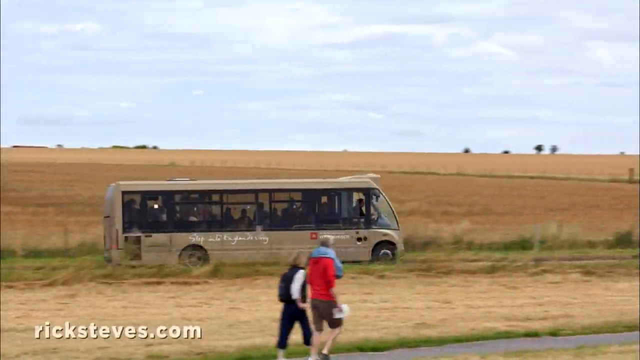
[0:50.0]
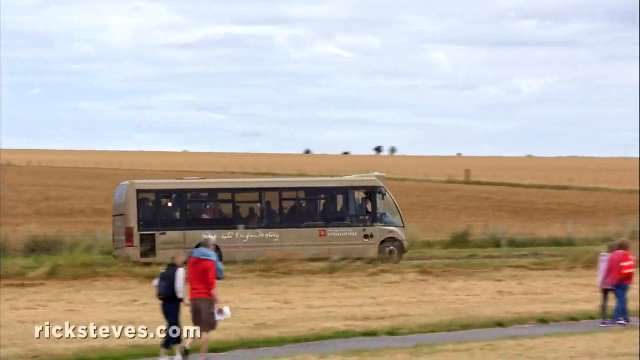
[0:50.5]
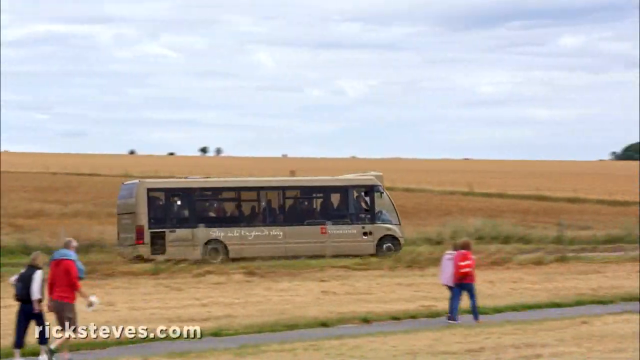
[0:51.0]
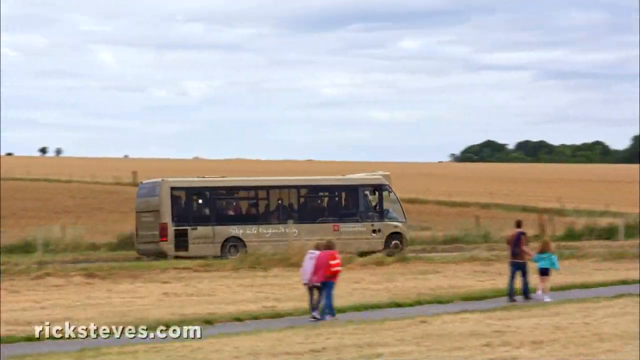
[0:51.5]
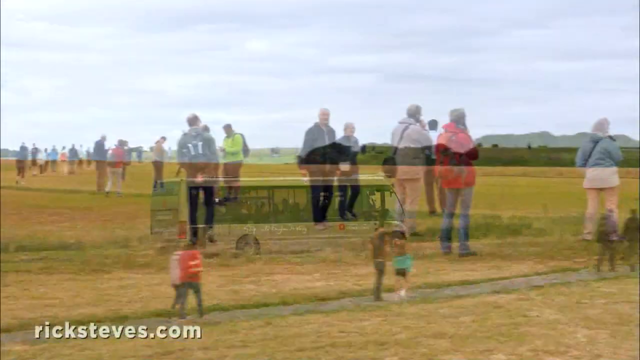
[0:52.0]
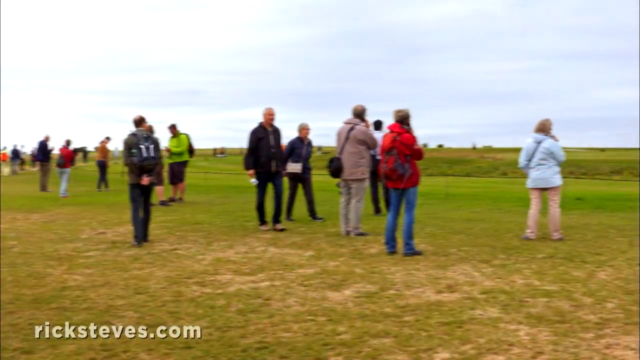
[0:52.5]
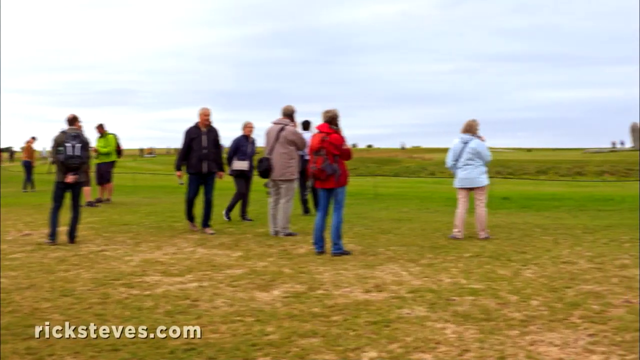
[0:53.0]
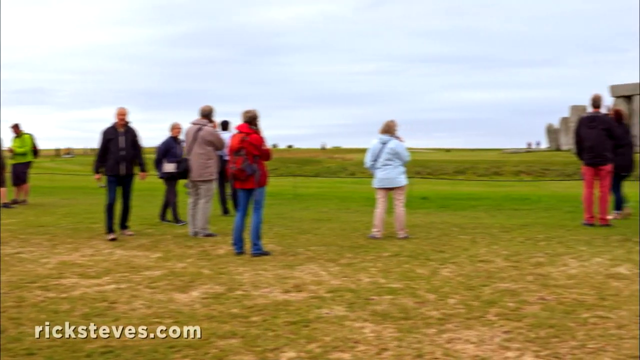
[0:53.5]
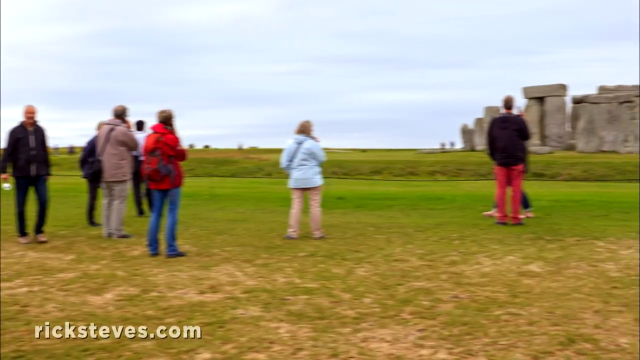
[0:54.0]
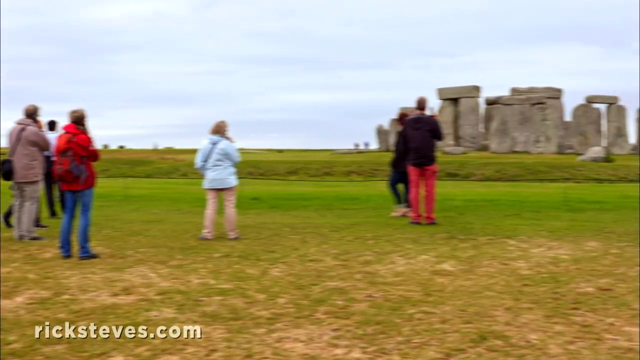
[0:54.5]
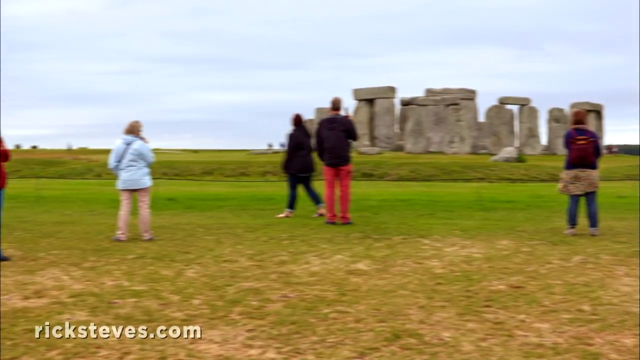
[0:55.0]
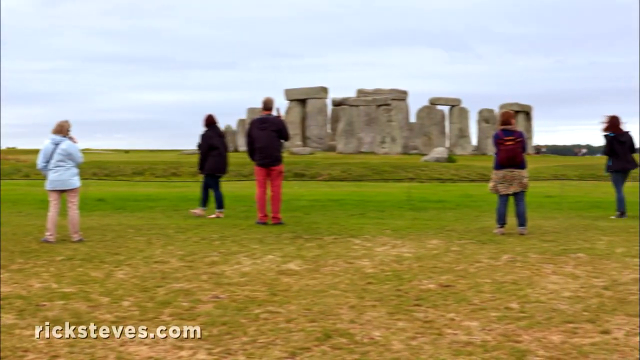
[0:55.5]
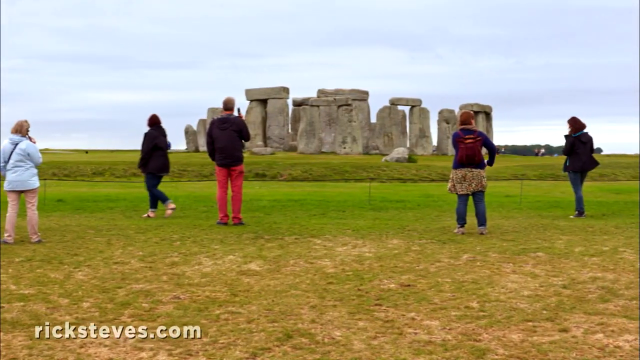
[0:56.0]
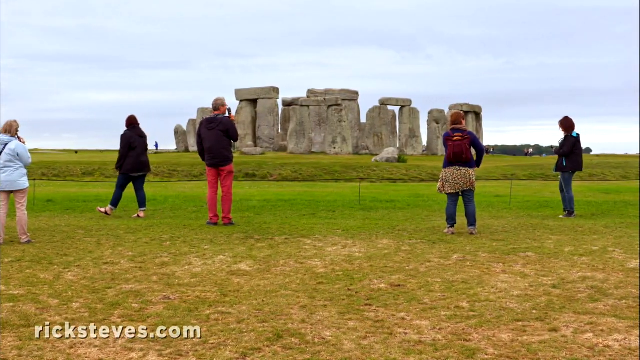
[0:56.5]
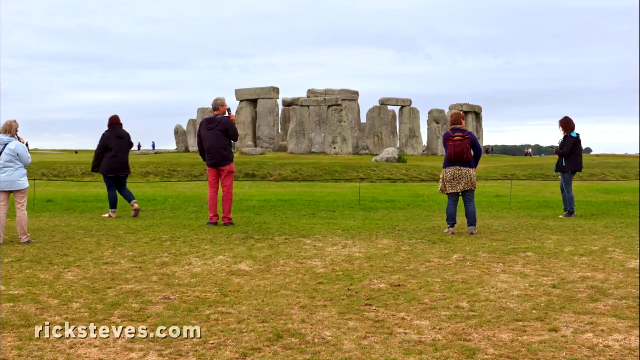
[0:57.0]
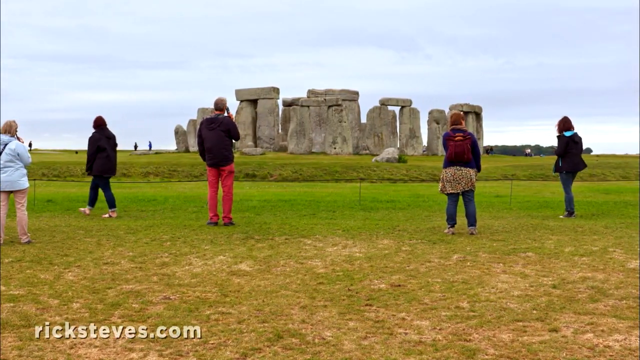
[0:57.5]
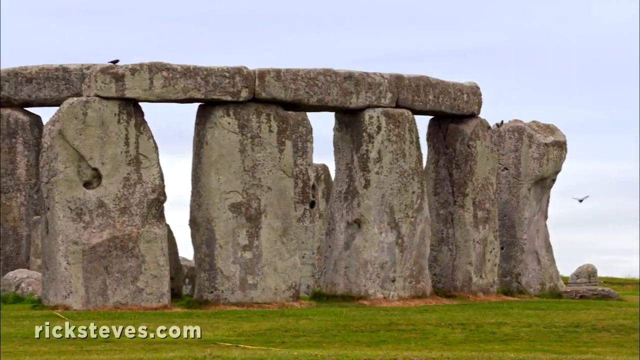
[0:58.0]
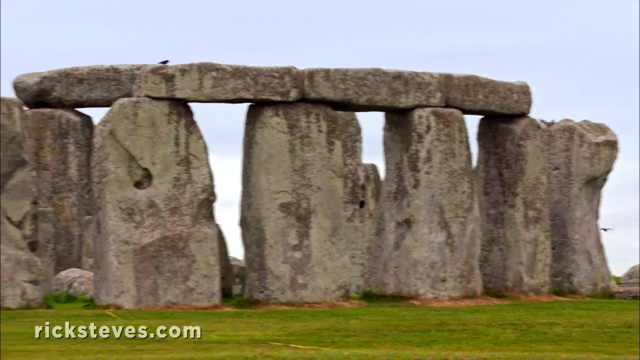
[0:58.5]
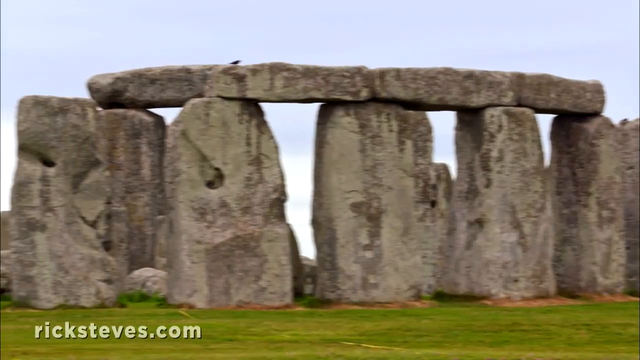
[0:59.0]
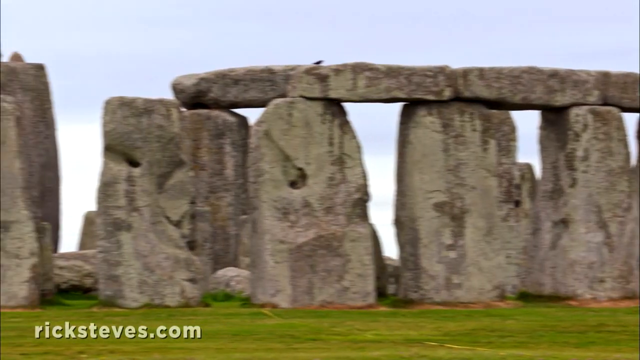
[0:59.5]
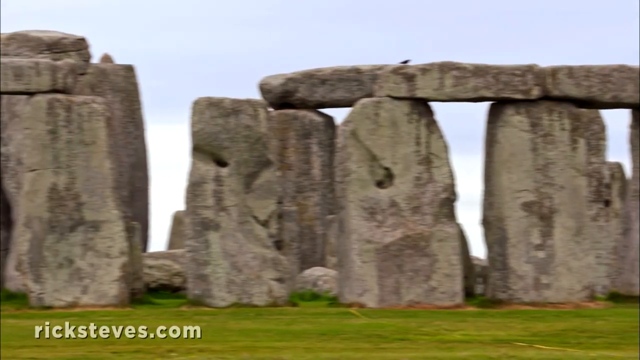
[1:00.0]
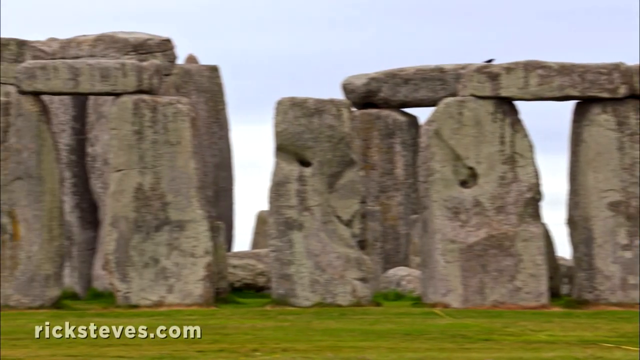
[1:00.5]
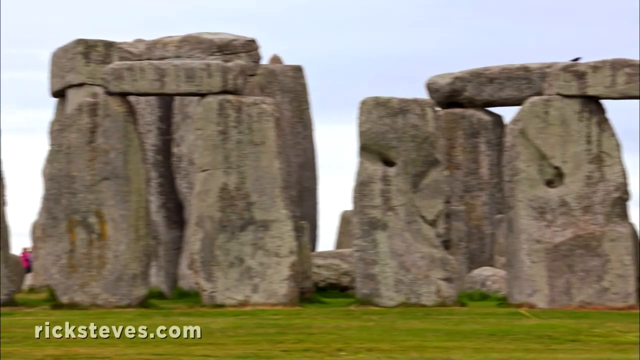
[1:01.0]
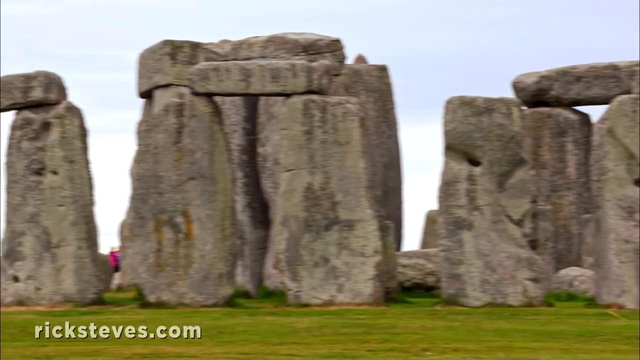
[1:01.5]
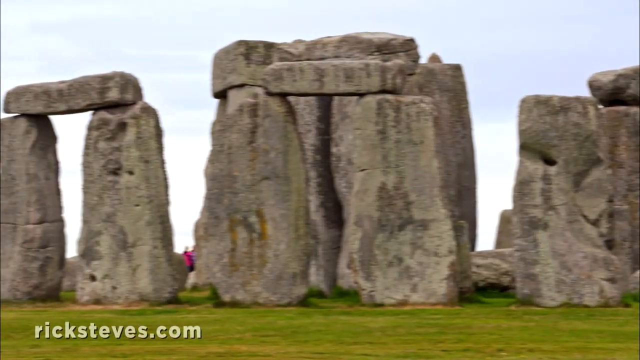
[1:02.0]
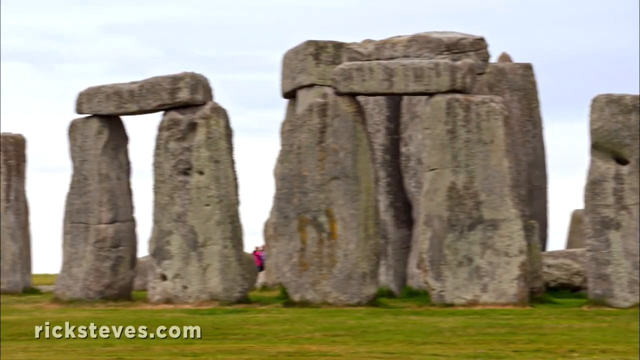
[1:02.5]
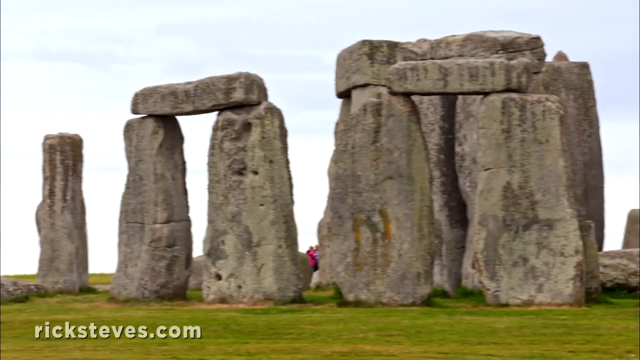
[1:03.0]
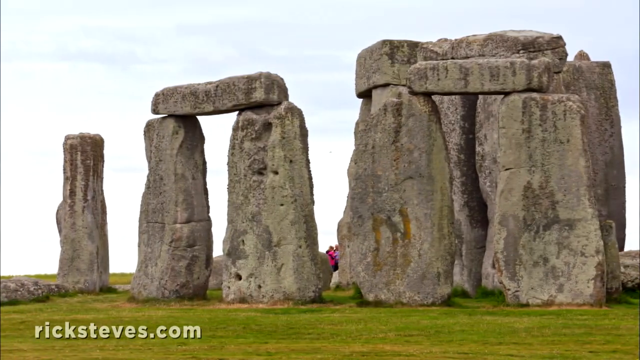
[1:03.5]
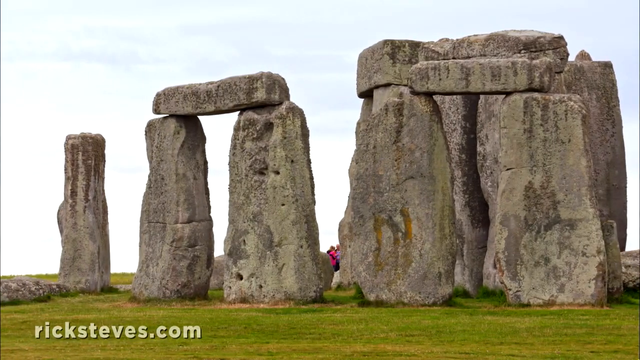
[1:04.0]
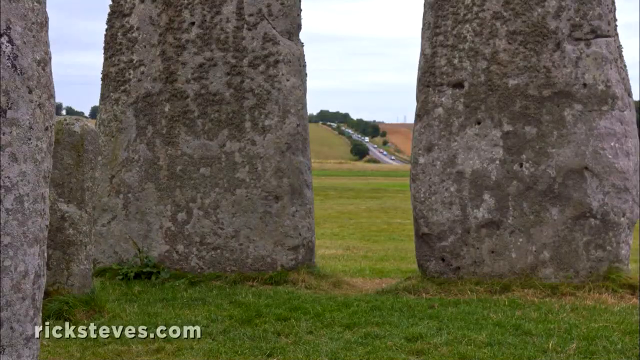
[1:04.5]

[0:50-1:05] A bus drives along a green landscaped area. Stonehenge is seen during the day under a blue sky, with many people gathered on the lawn looking at it. A bird flies in the sky above the stones. Several people walk along a walkway next to the street the bus drives across. The grass below Stonehenge is very green and very well manicured. The camera scans the whole view alongside Stonehenge. A man in red pants and a black jacket stands in front of Stonehenge, and a woman in a thick white coat with a cross-body bag also faces Stonehenge.